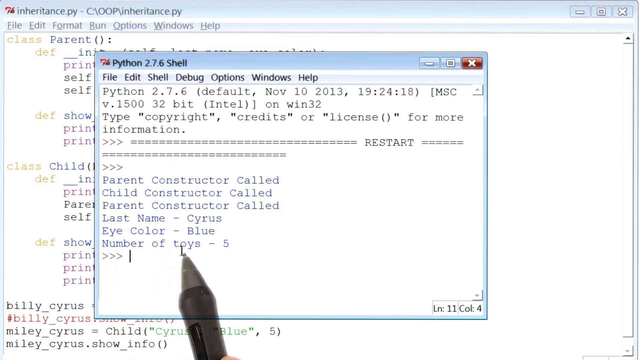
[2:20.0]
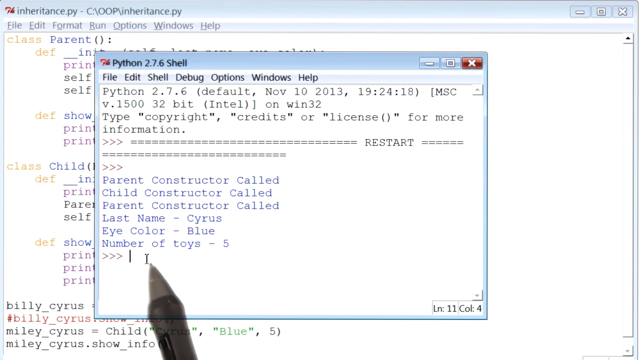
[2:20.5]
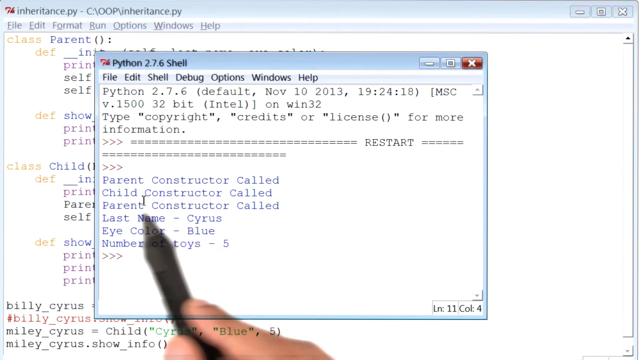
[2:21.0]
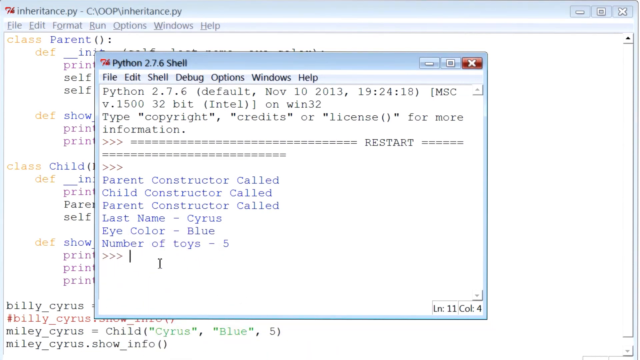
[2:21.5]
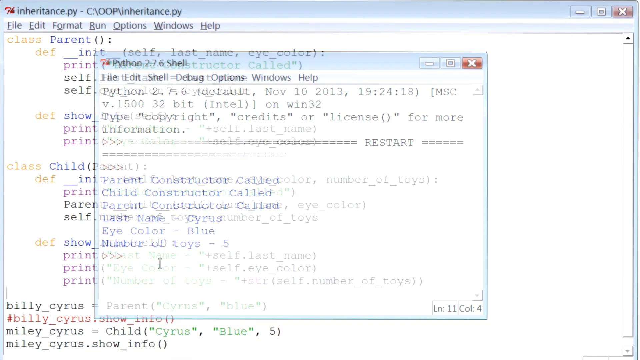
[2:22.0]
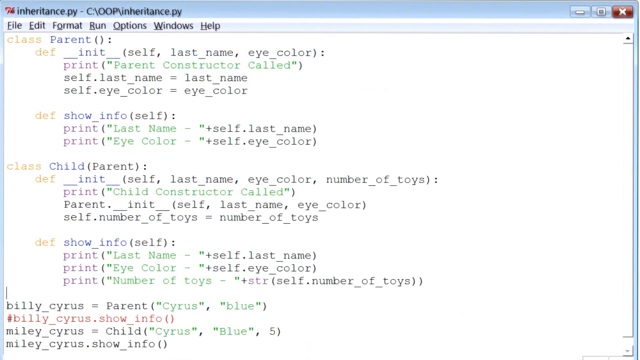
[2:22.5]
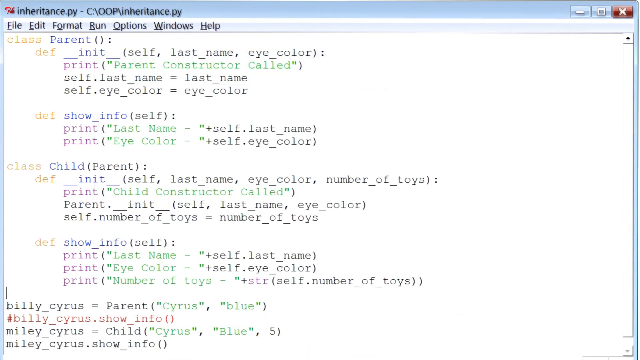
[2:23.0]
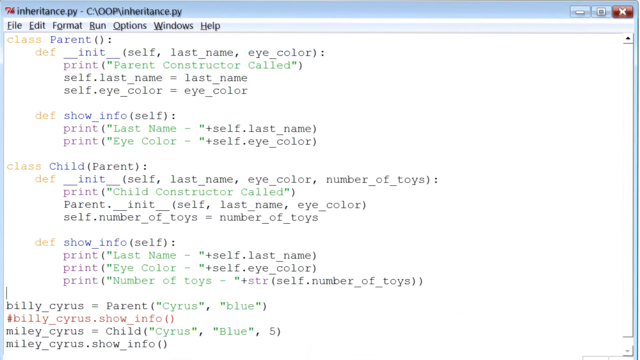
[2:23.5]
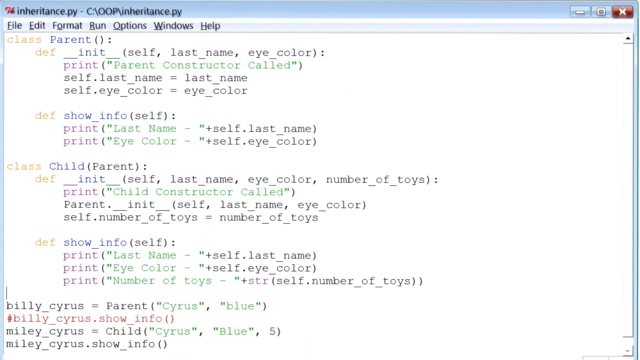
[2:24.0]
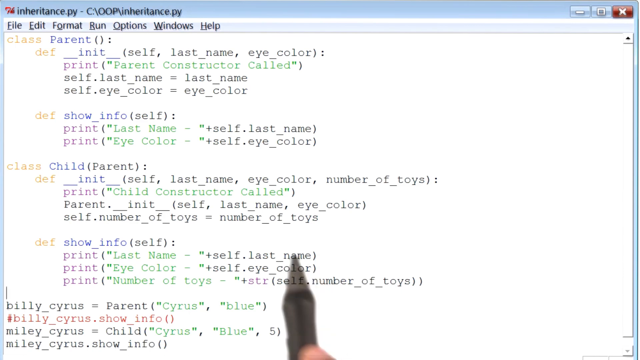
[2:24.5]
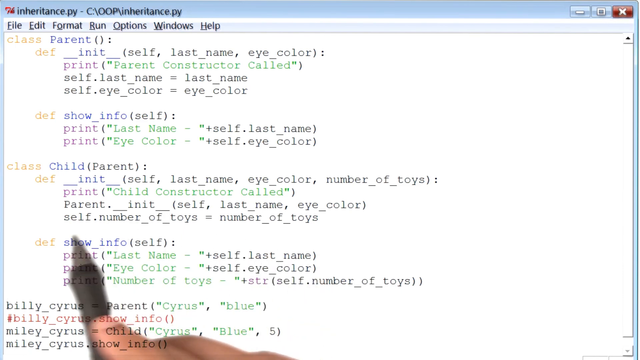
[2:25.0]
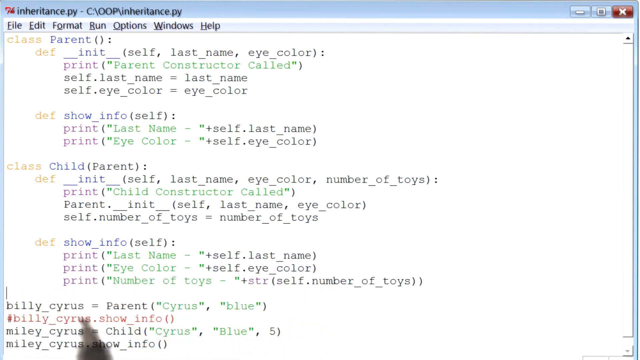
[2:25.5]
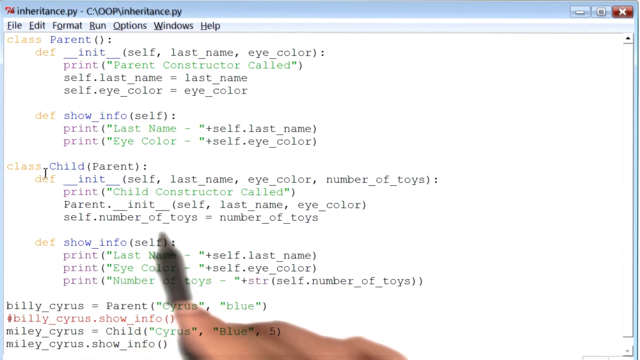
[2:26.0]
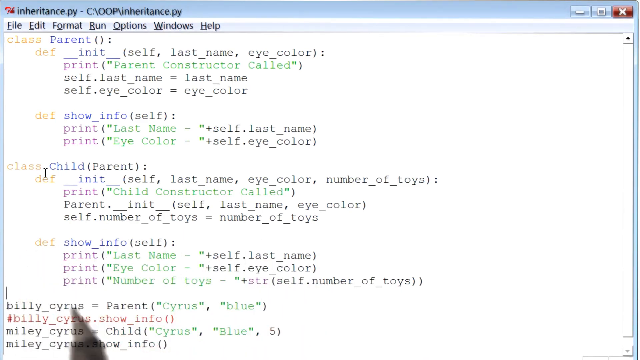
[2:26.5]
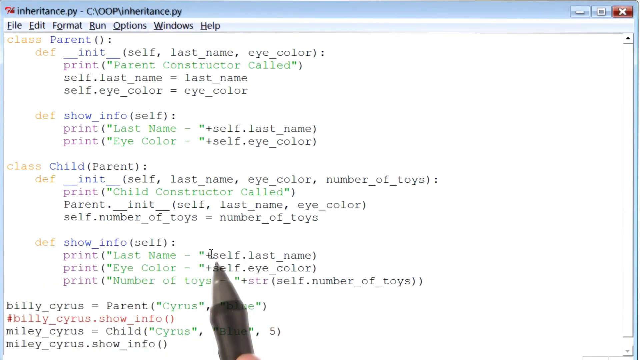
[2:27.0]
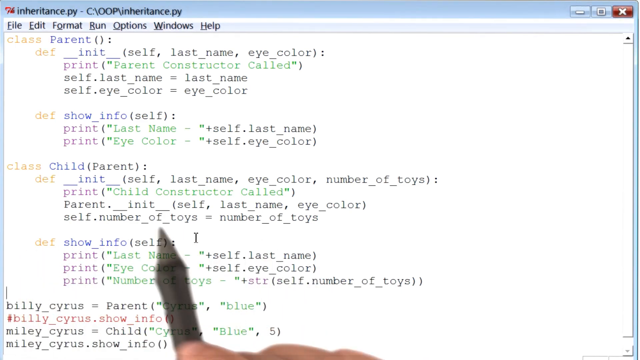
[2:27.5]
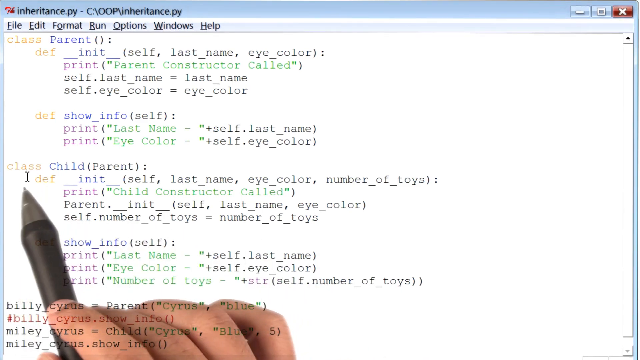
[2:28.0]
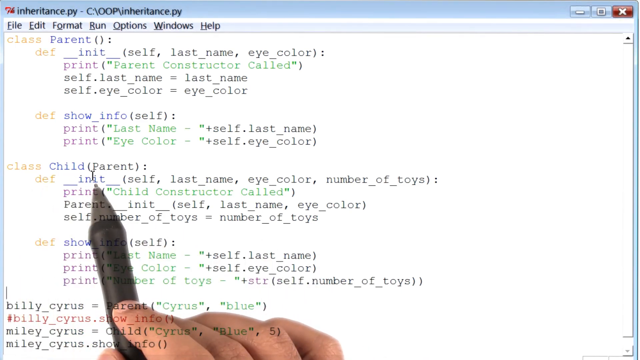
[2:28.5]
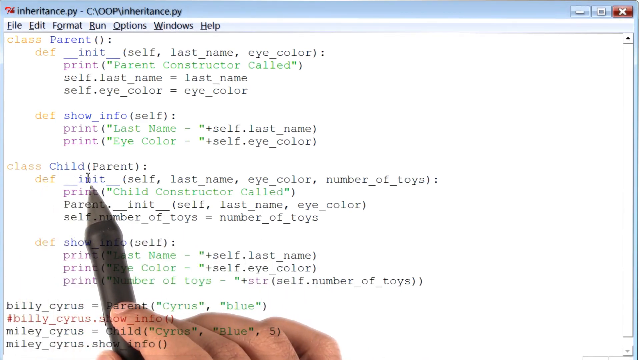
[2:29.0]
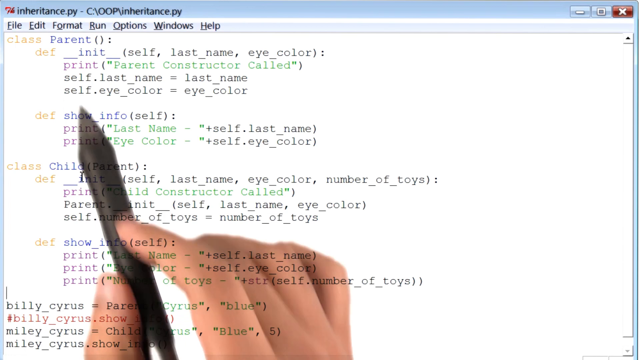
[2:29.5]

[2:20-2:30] Apparently a coding lesson, the video shows a document open called "Inheritance PY"; at points the person opens something called Python Shell. The document lists the class parents and facts about them, such as eye color, and the same for the child, with Billy Ray Cyrus as the model parent and Miley Cyrus as the child. A stylus comes out and circles, points to and underlines things, and circles the bottom part about the number of toys. The stylus is black and silver with an up-down button on its side.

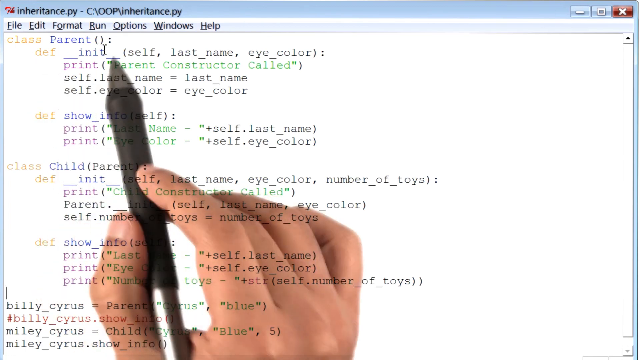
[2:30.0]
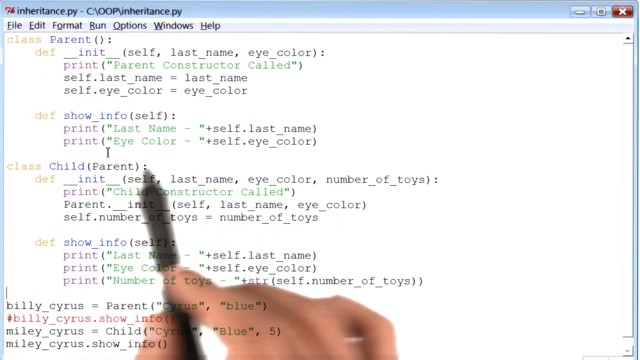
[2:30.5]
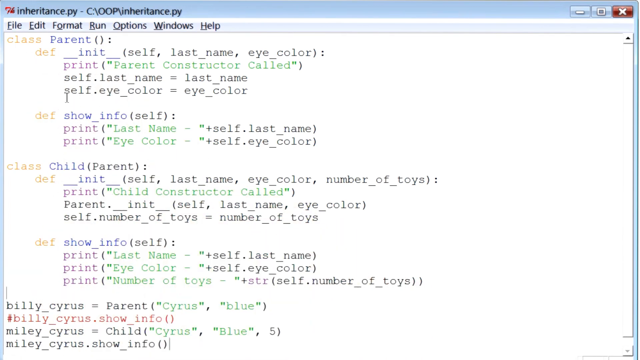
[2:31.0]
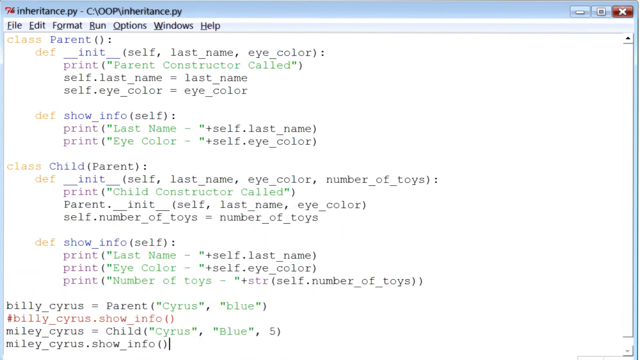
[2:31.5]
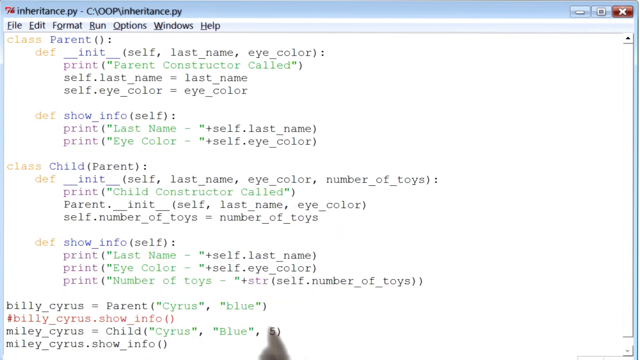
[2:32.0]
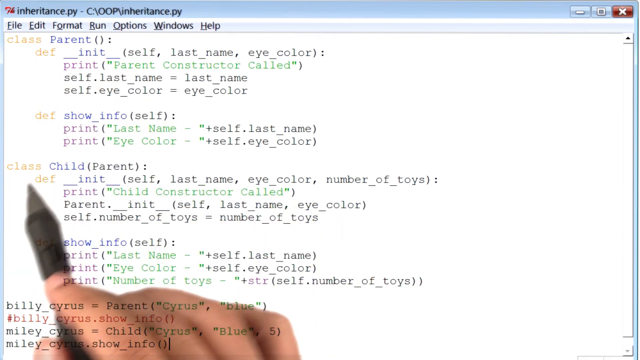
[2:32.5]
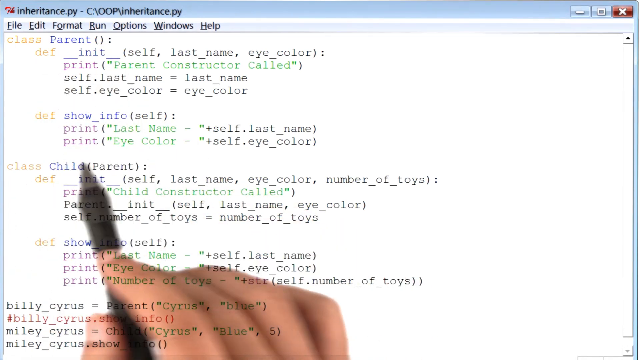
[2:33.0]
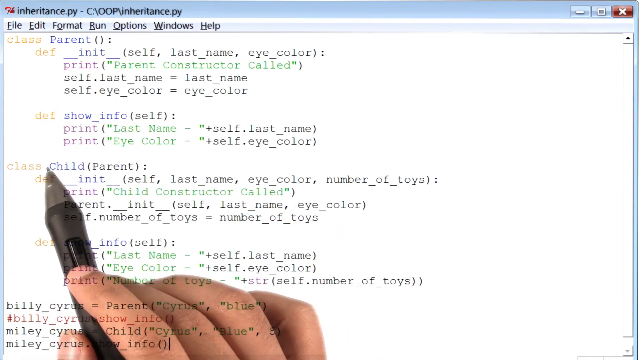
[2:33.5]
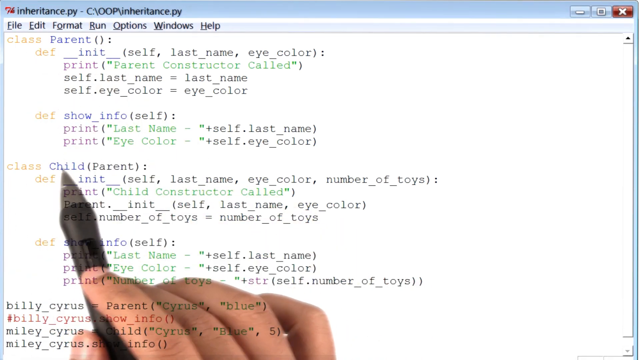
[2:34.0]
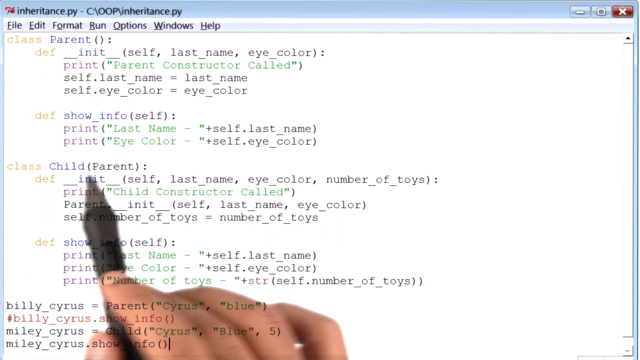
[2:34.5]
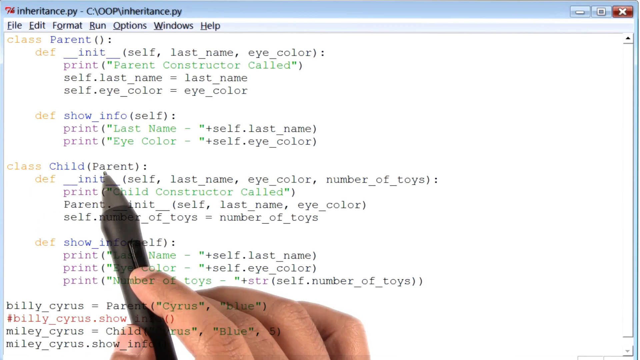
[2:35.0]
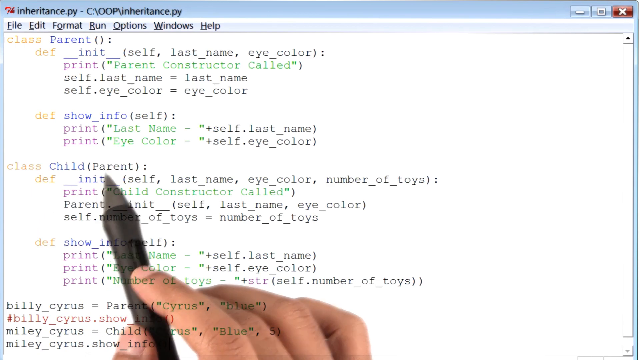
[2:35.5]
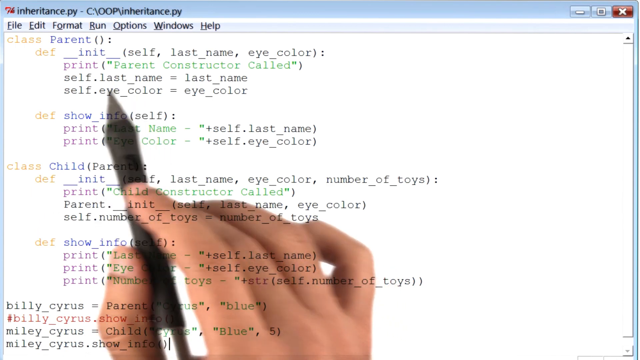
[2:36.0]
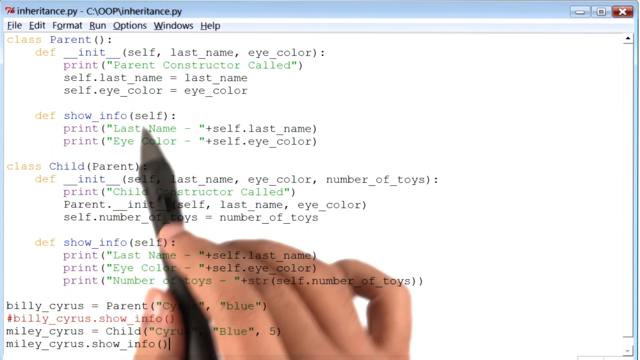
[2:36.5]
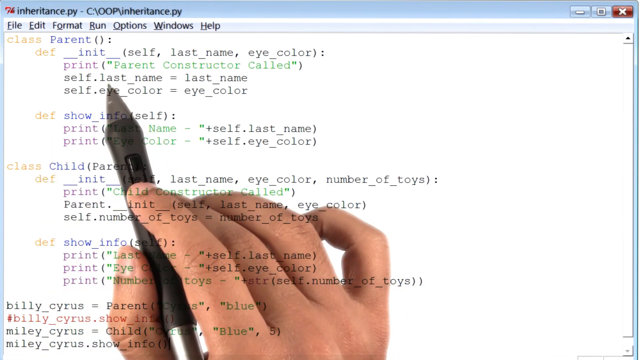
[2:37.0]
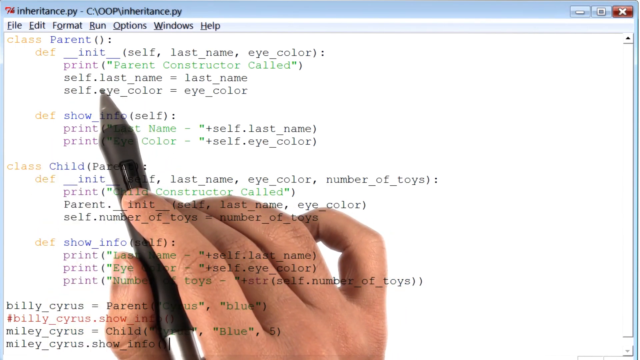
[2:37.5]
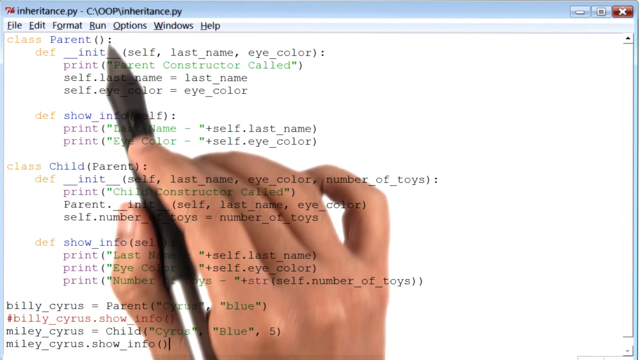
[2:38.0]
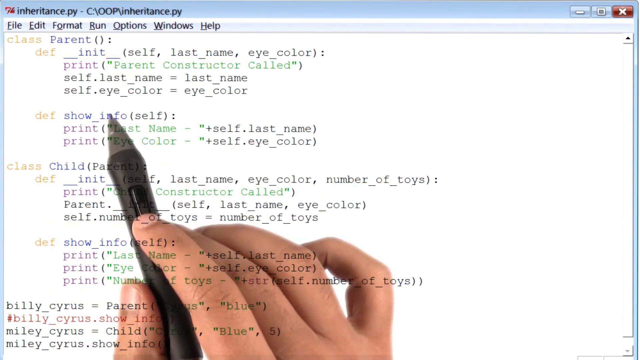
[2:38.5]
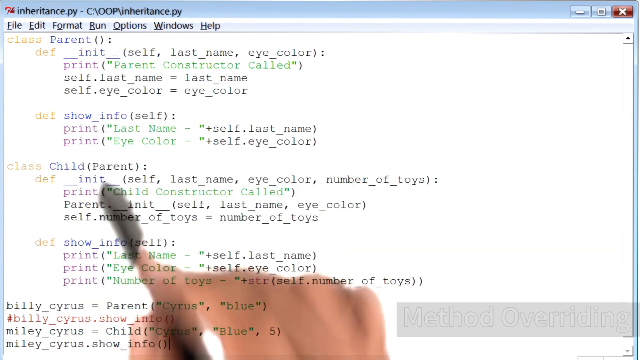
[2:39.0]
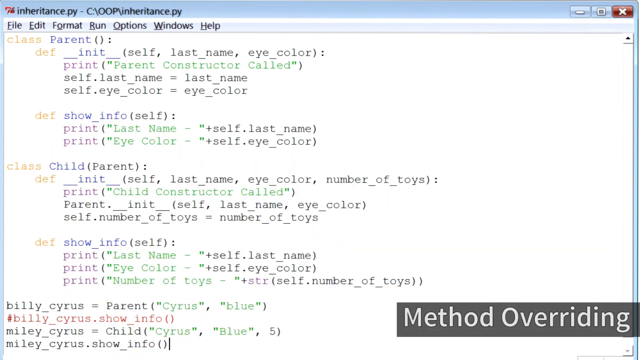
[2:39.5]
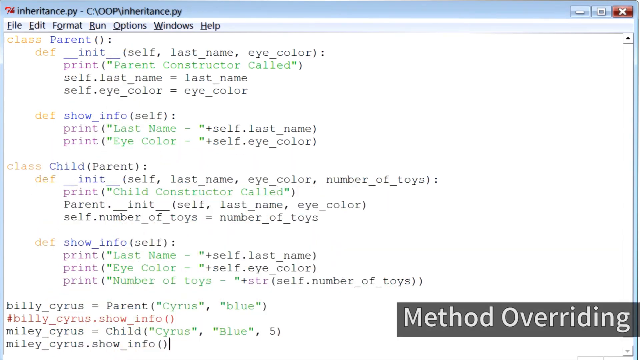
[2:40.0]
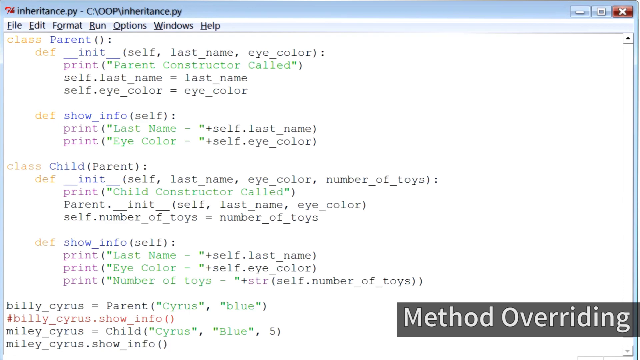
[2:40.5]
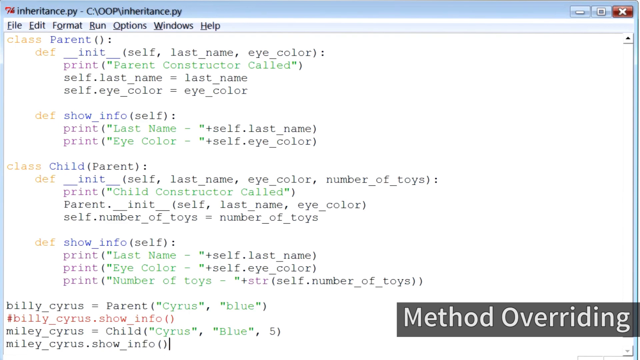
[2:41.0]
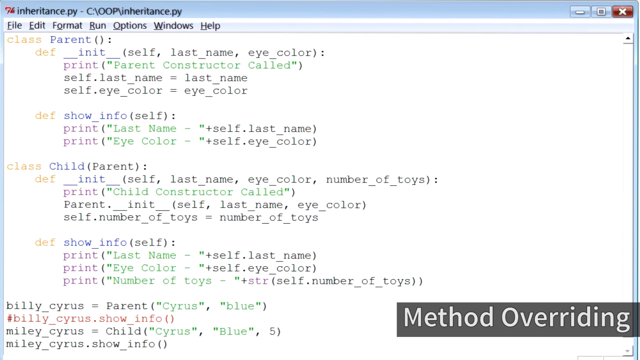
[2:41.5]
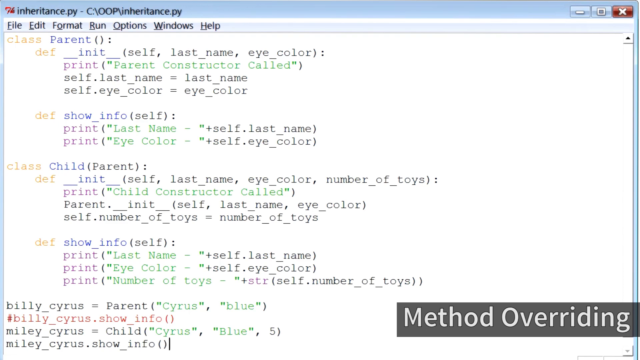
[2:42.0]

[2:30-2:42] Someone is apparently teaching coding in a document called "inheritance.py". Occasionally they click on file and pull down something called Python shell. The document lists parent name and eye color, and the same for the child along with number of toys. Billy Cyrus is used as the example parent and Miley Cyrus as the example child. The person holds a stylus in the right hand, pointing to and underlining things.